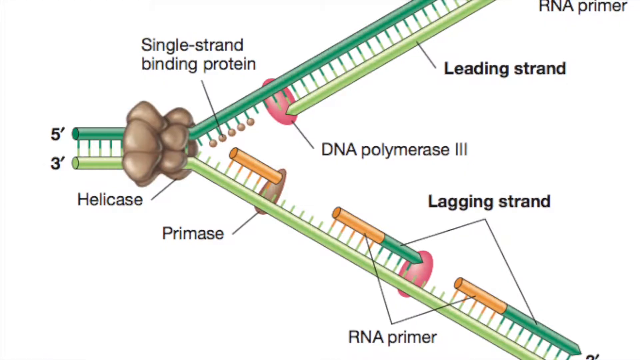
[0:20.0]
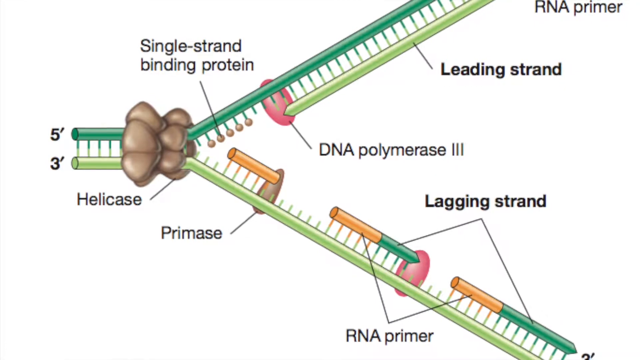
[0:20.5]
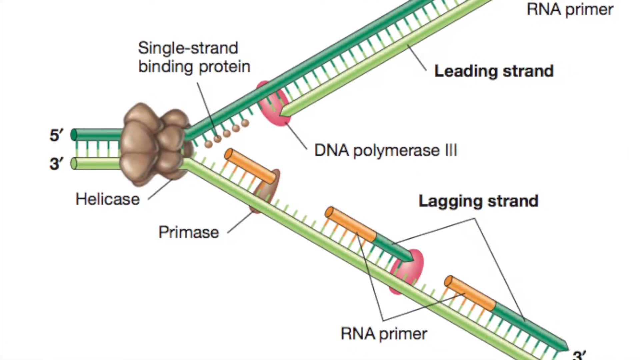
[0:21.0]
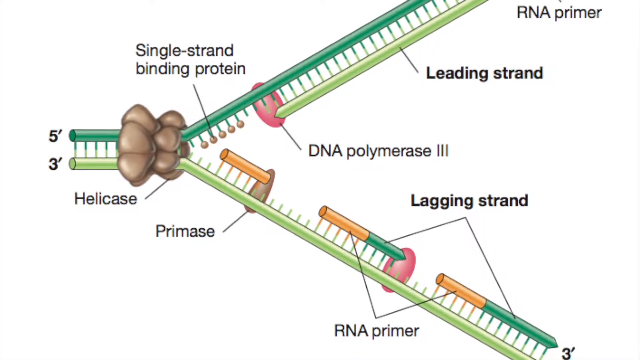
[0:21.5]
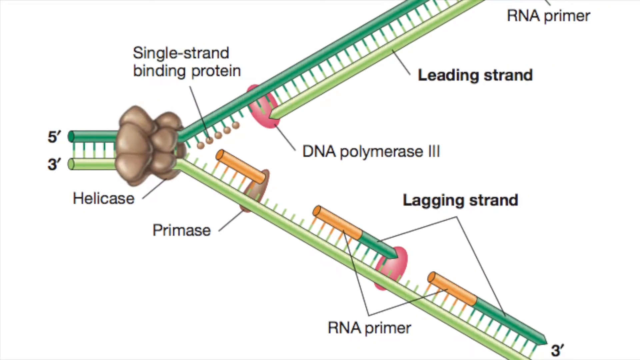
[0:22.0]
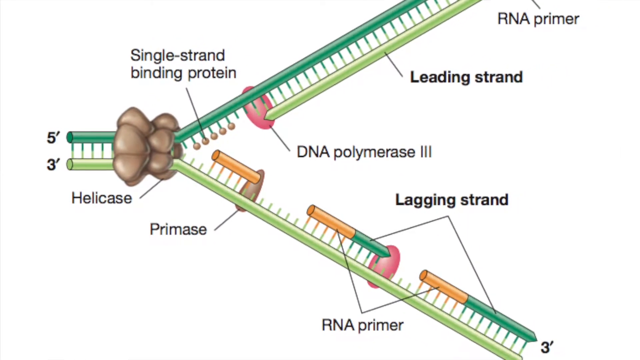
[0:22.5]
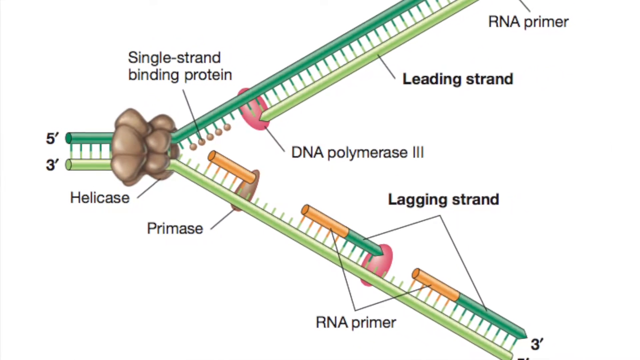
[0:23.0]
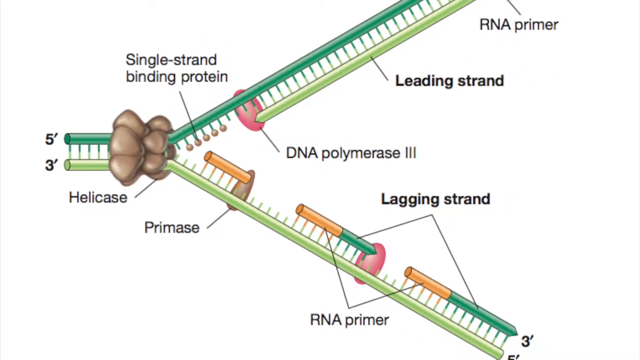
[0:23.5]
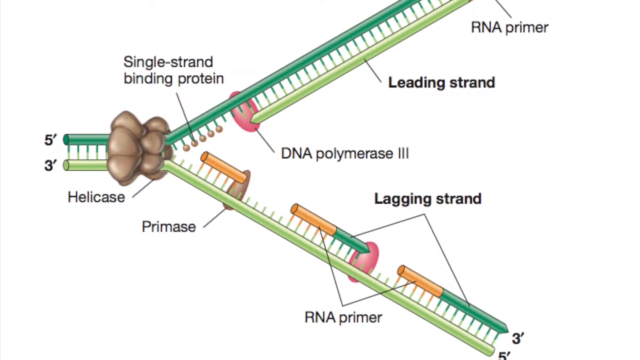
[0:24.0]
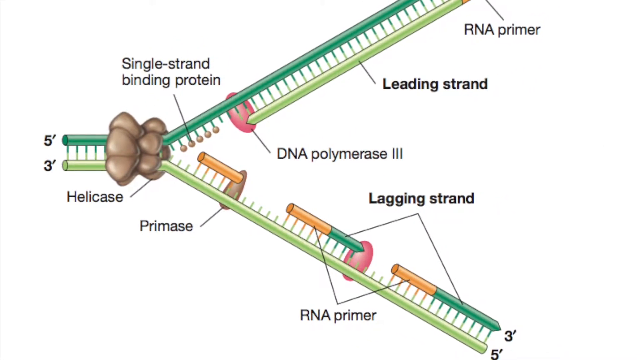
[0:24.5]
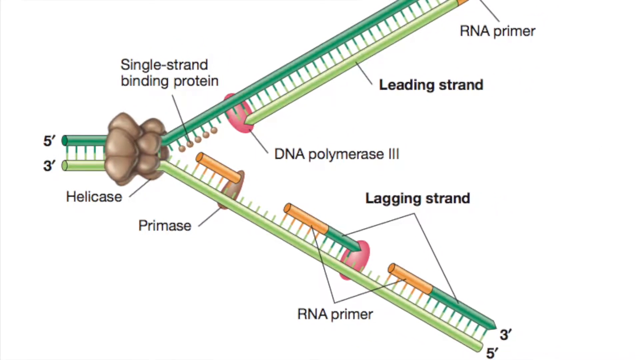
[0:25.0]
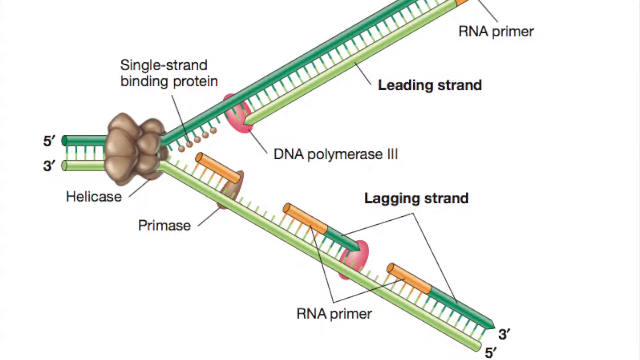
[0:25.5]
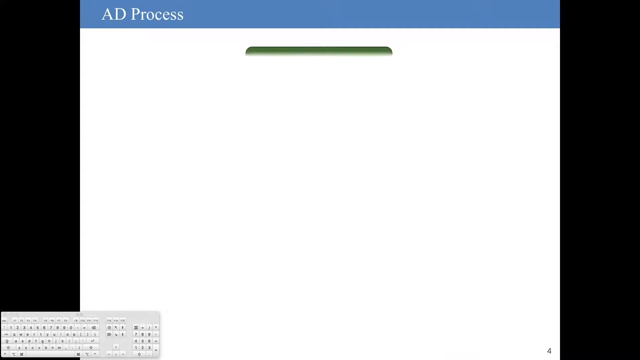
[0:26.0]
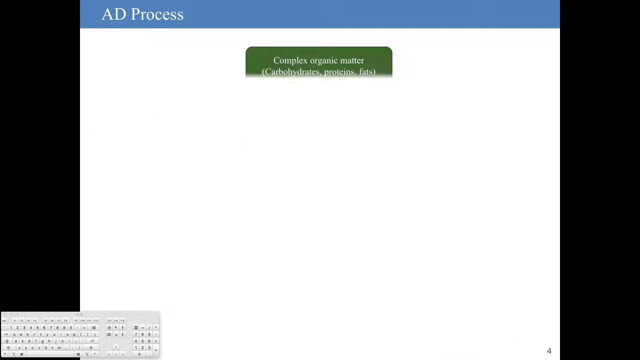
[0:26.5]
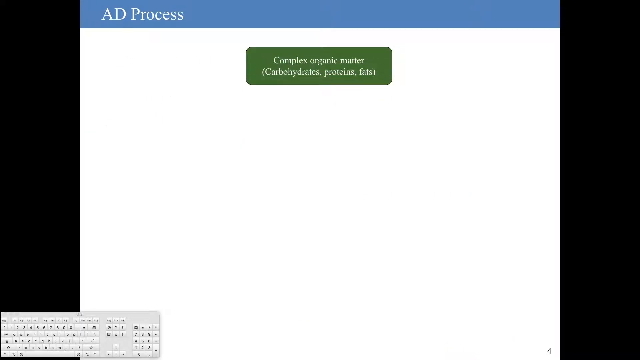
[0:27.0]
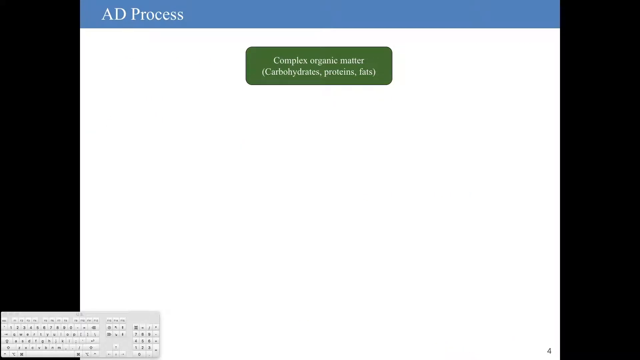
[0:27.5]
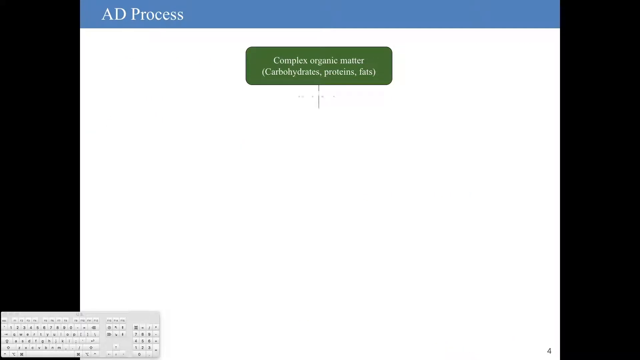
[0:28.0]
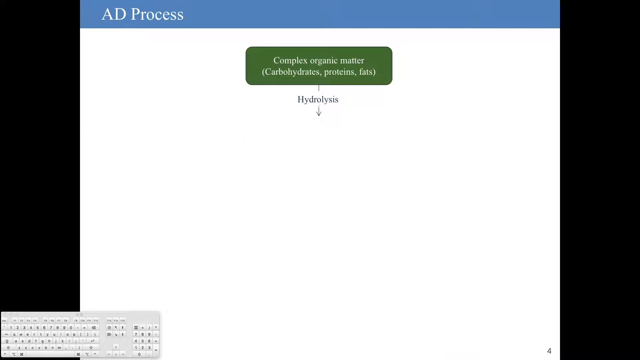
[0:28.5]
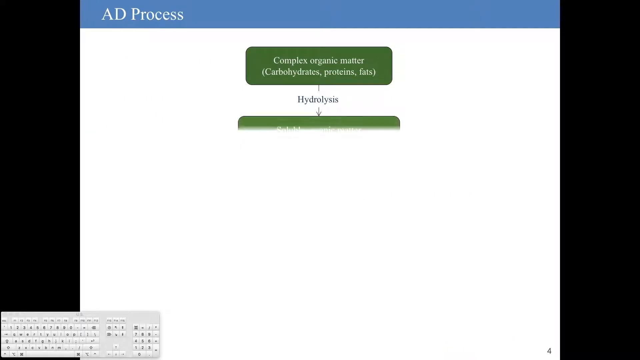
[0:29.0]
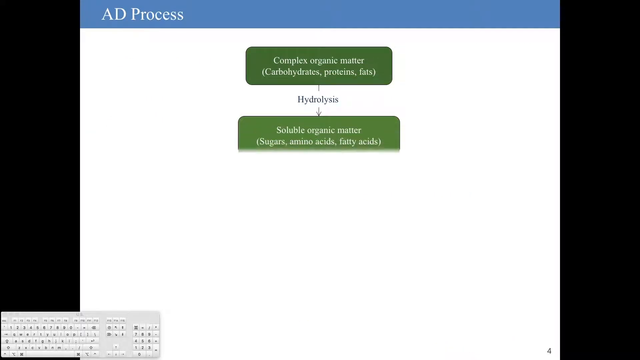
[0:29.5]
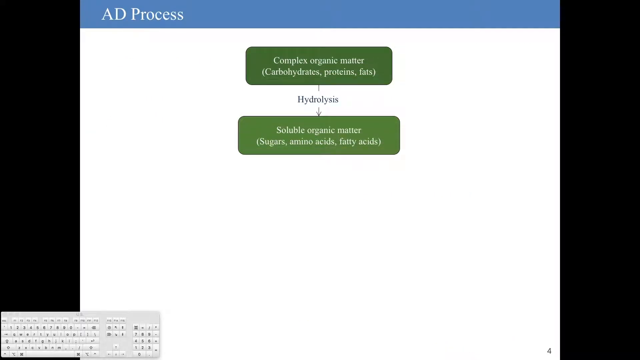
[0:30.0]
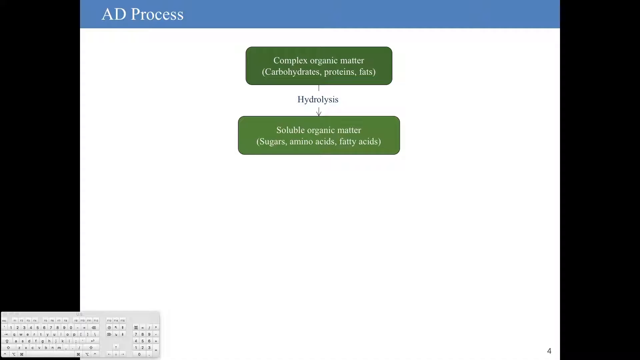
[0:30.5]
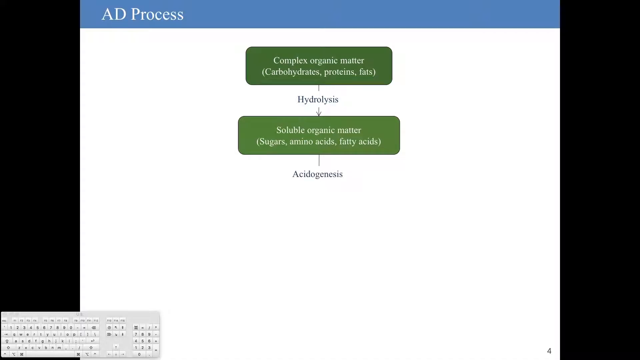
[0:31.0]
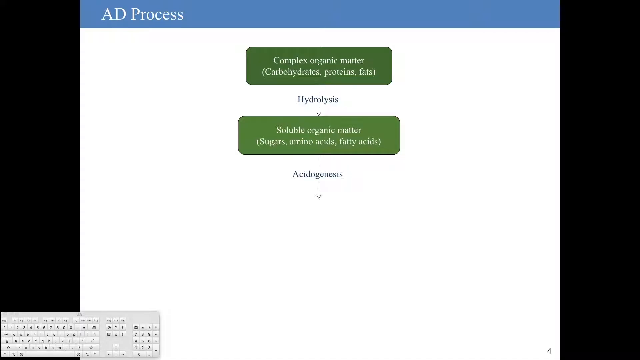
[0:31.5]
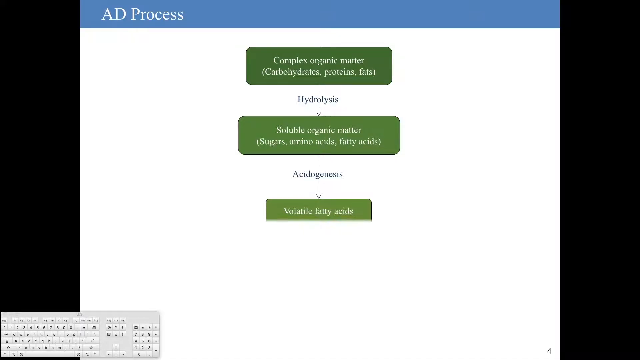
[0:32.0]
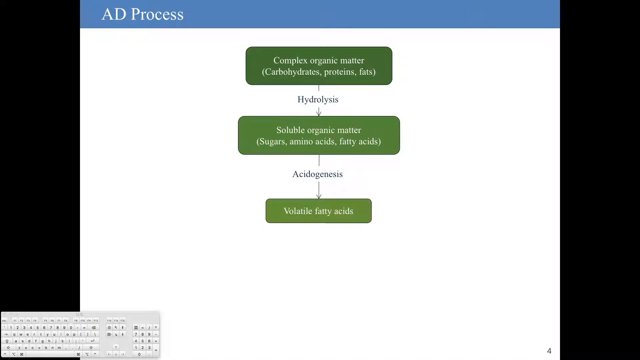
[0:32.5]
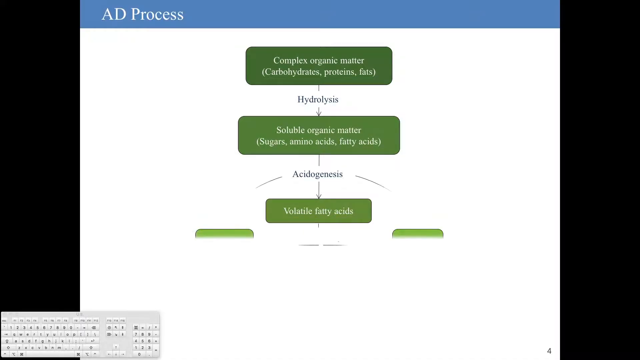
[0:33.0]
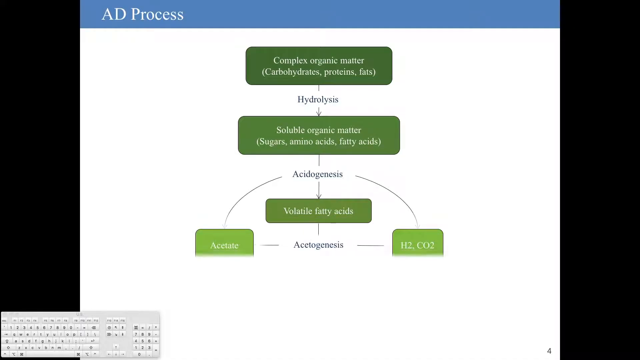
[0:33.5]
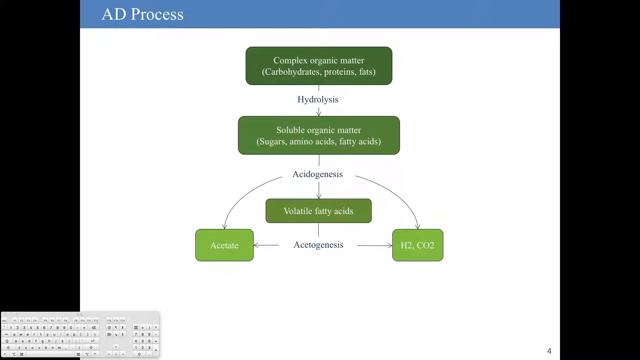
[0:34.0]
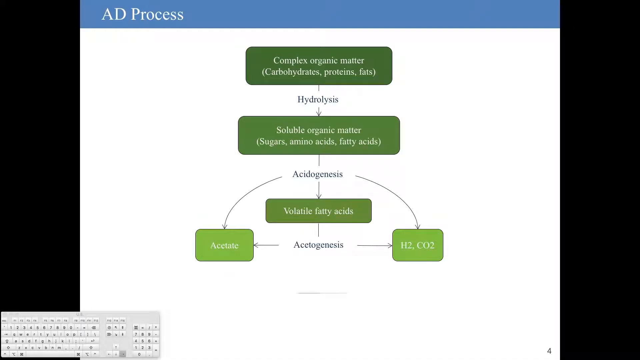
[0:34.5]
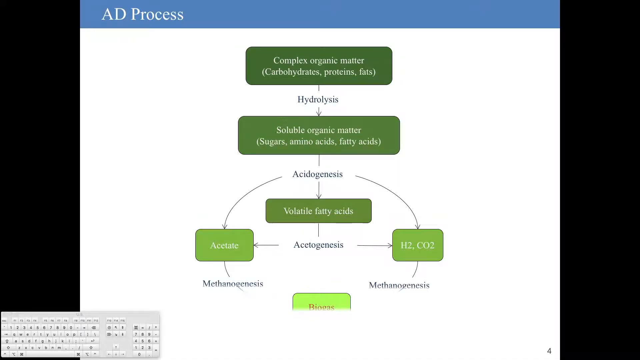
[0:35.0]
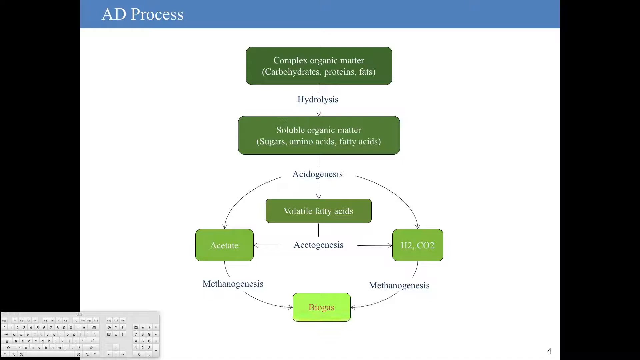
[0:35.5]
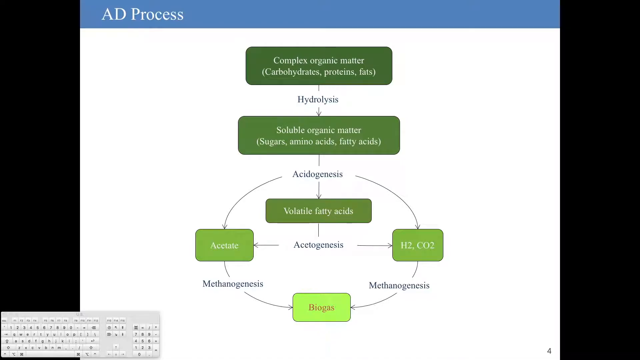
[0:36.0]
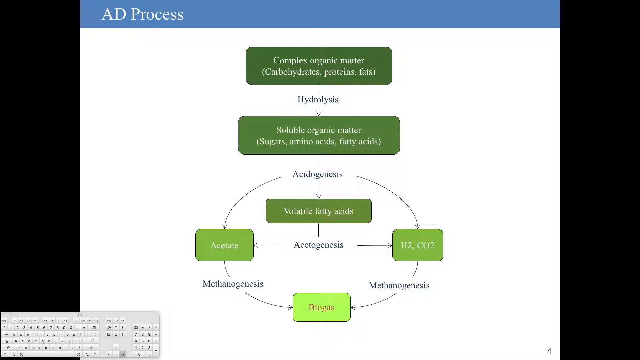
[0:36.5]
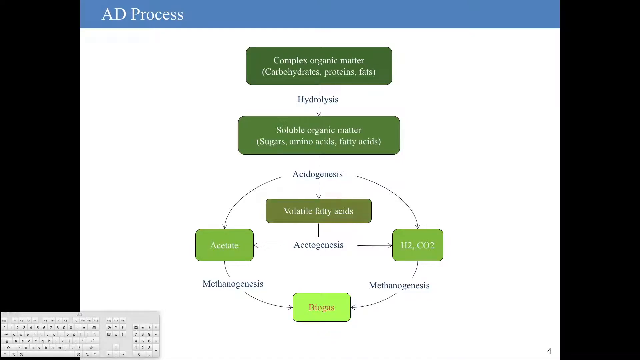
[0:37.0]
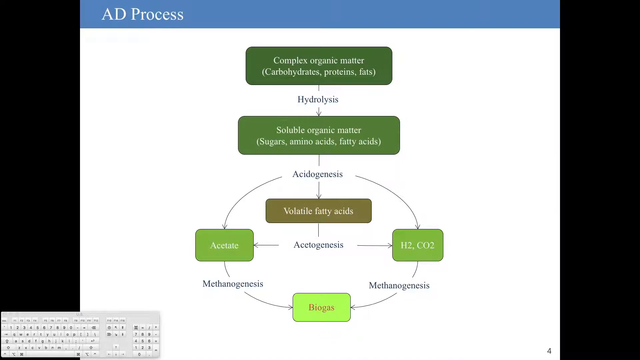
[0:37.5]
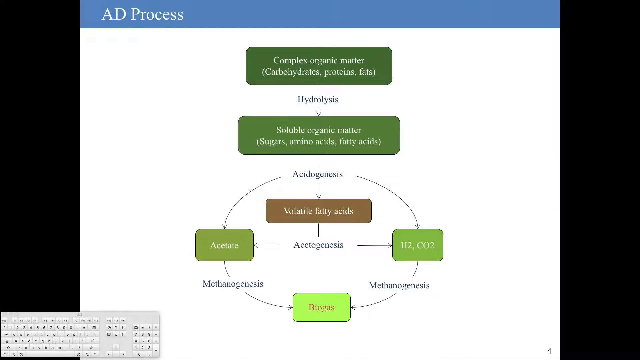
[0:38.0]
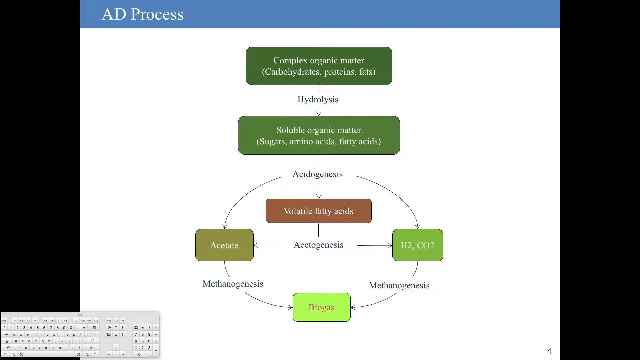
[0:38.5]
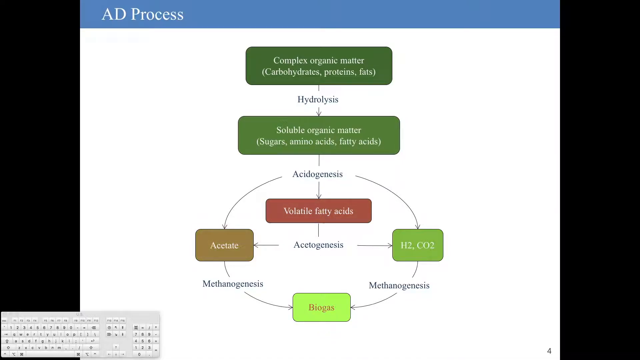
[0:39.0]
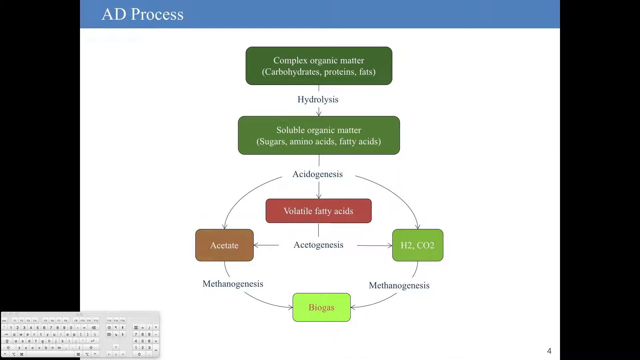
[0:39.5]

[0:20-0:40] The words "single-strand binding proteins" appear in the upper left corner, and beneath them is a chart showing the process of the single-strand binding protein. In the upper right corner is "RNA primer", and beneath it "leading strands". As the view pans out, more becomes visible: "DNA, polymerase III", "lagging strand" and "RNA primer" toward the bottom of the chart, and "primase" and "helicase" connected to the bottom of the chart. The screen then changes. At the top, the words "AD process" are written in white on a blue background. A rectangular box appears containing the words "complex organic matter", with "carbohydrates, proteins, and fats" beneath. A chart then appears beneath this. Its first portion shows "hydrolysis". The next portion is a larger green rectangular box reading "soluble organic matter, sugars, amino acids, fatty acids". After another line come the words "acidogenesis", and beneath them an arrow points to a green rectangular box reading "volatile fatty acids". Beneath this, the chart branches out on the left side to "acetate" and on the right side to "H2 and CO2".